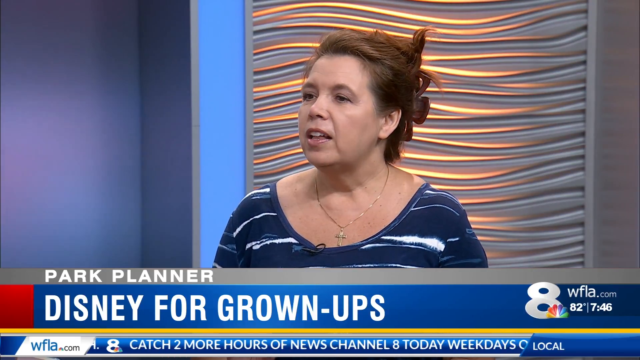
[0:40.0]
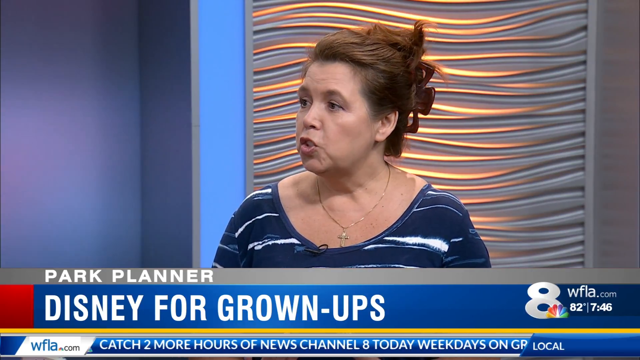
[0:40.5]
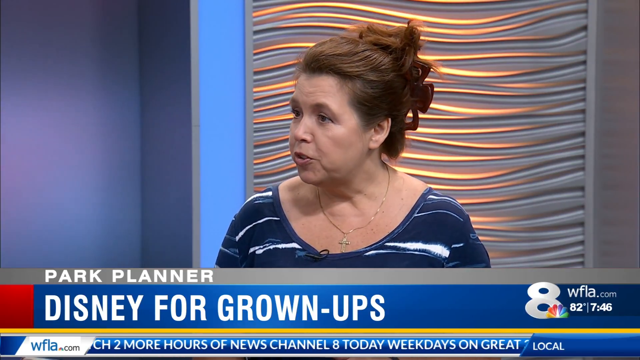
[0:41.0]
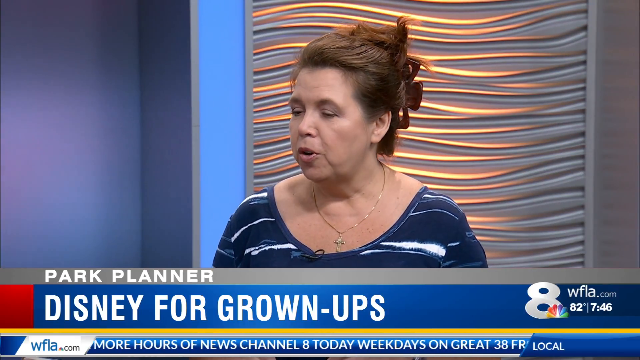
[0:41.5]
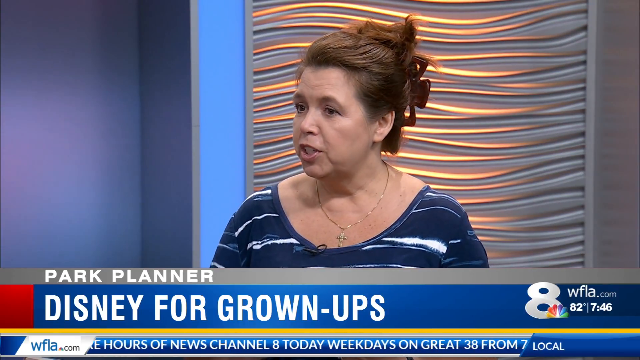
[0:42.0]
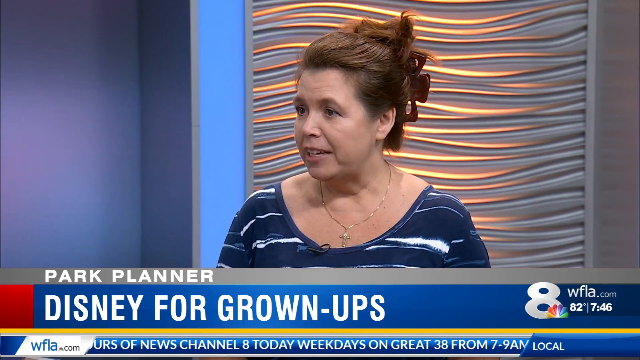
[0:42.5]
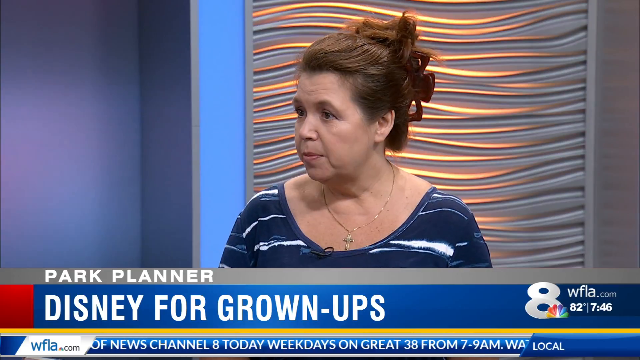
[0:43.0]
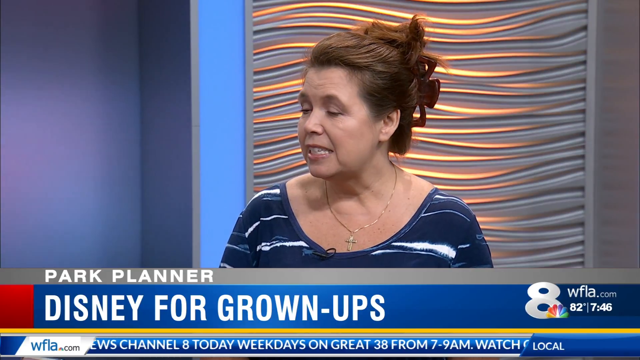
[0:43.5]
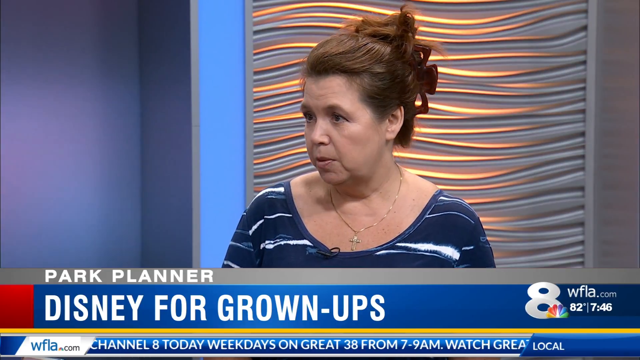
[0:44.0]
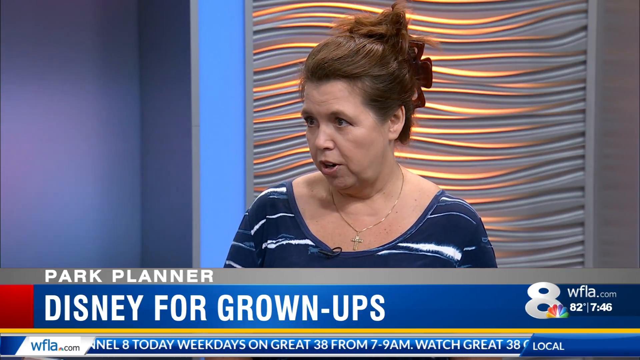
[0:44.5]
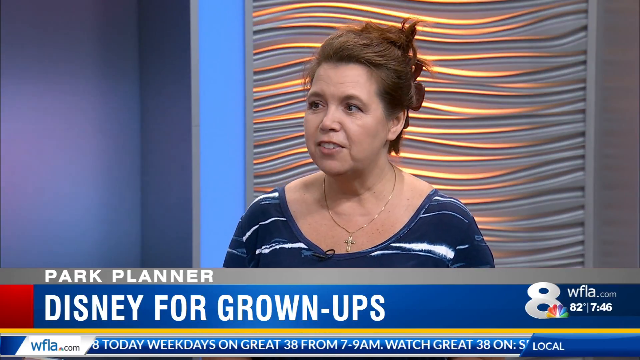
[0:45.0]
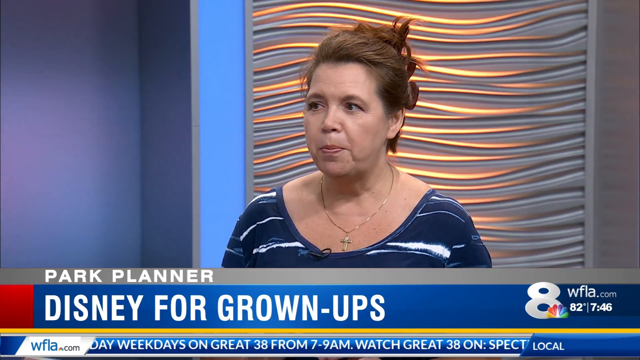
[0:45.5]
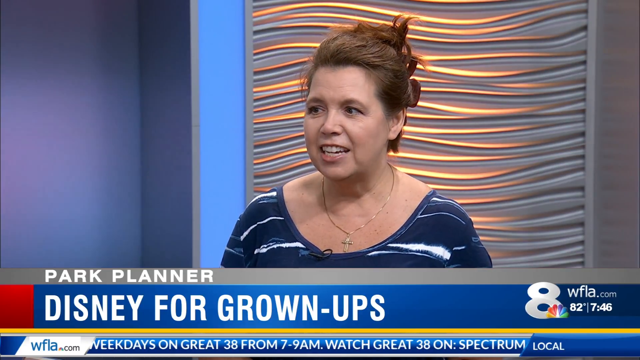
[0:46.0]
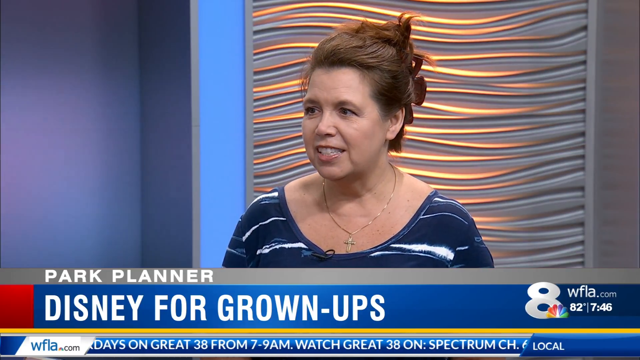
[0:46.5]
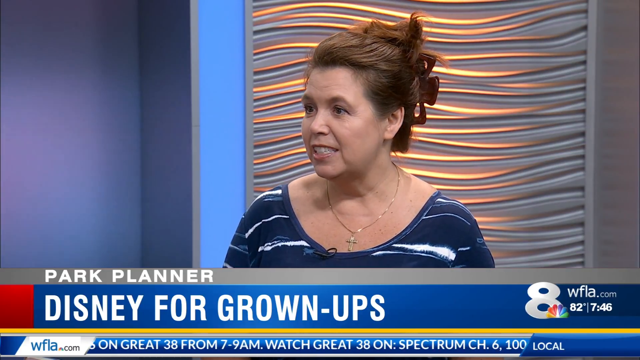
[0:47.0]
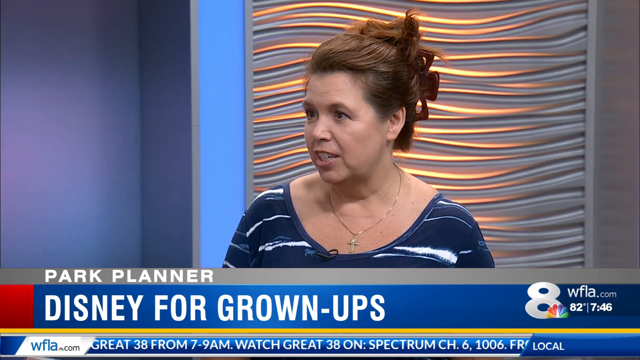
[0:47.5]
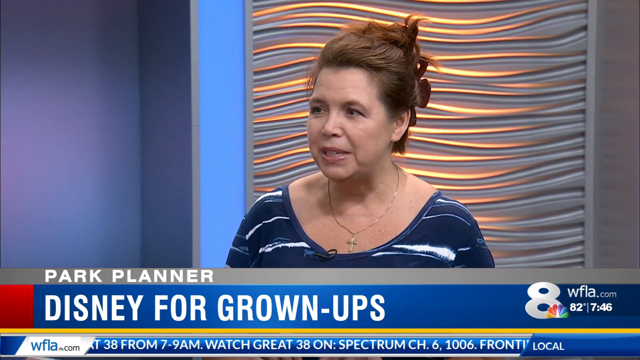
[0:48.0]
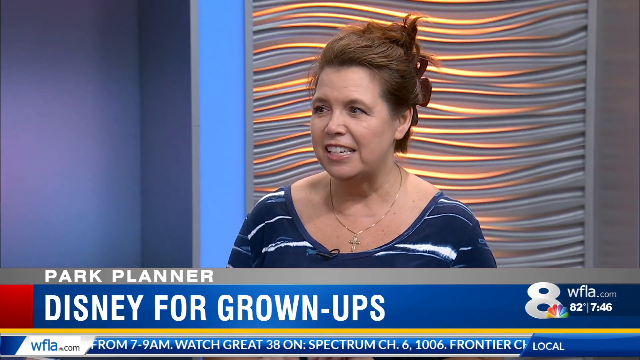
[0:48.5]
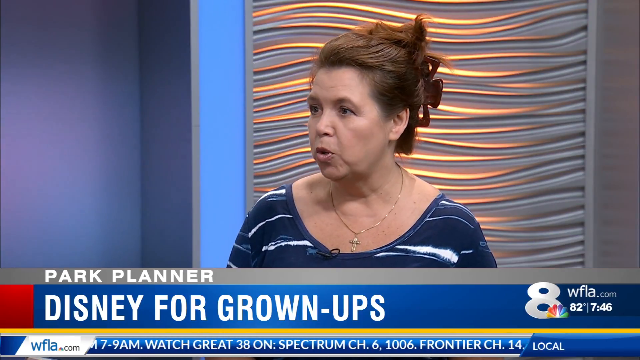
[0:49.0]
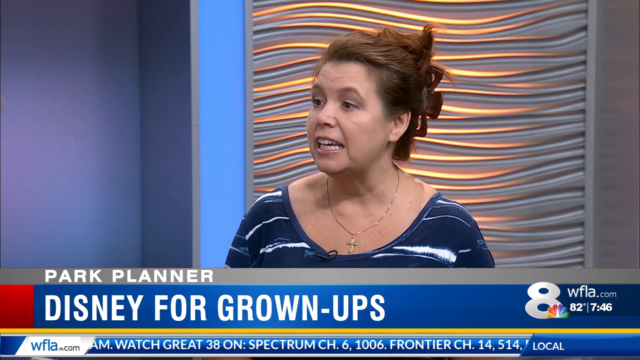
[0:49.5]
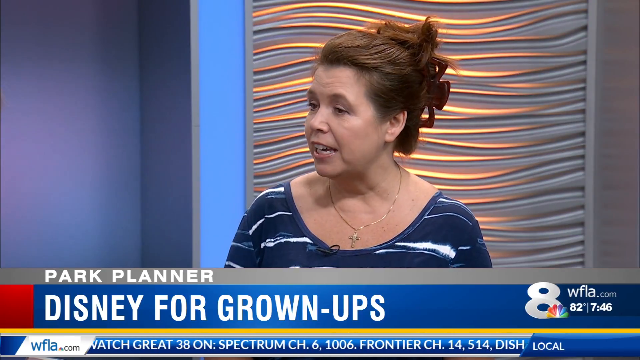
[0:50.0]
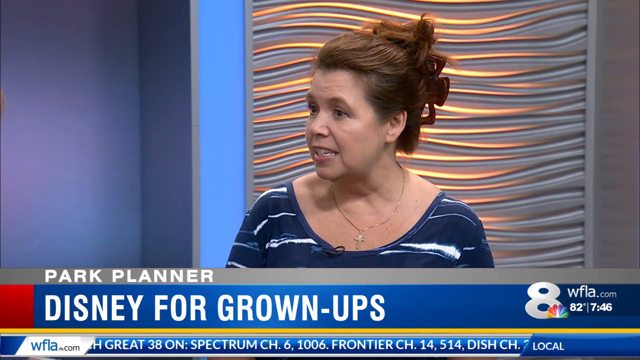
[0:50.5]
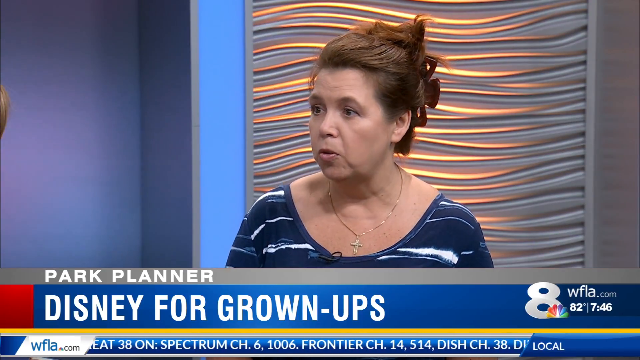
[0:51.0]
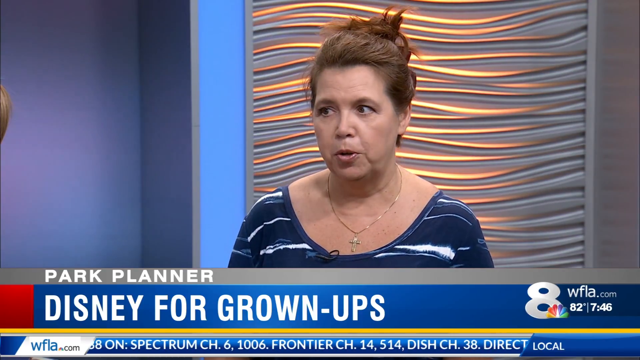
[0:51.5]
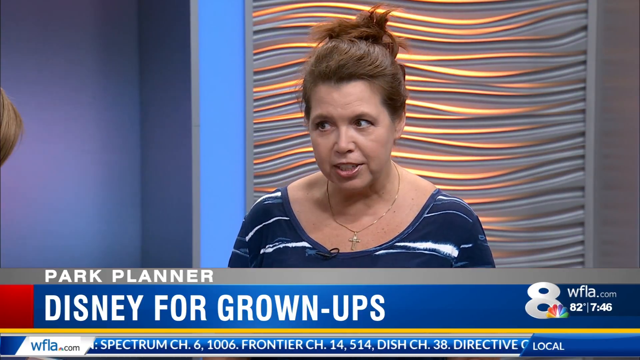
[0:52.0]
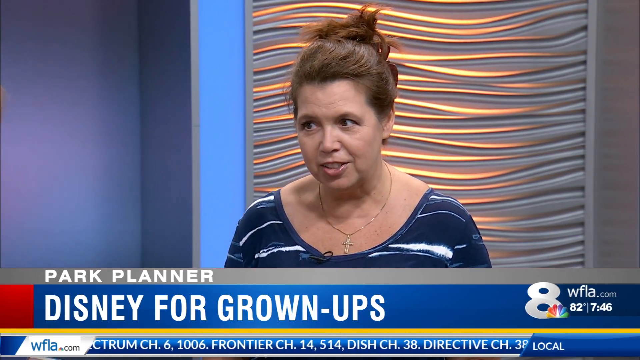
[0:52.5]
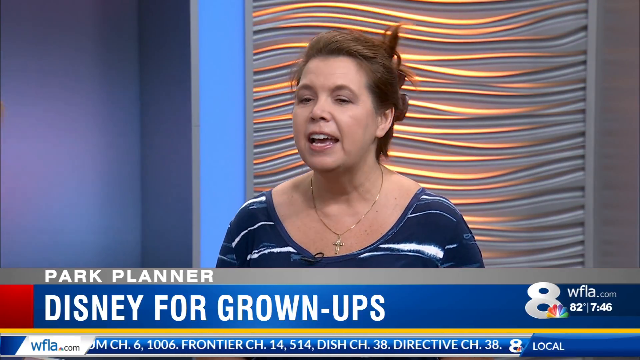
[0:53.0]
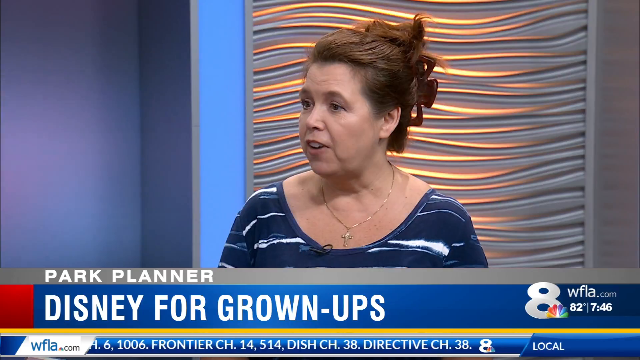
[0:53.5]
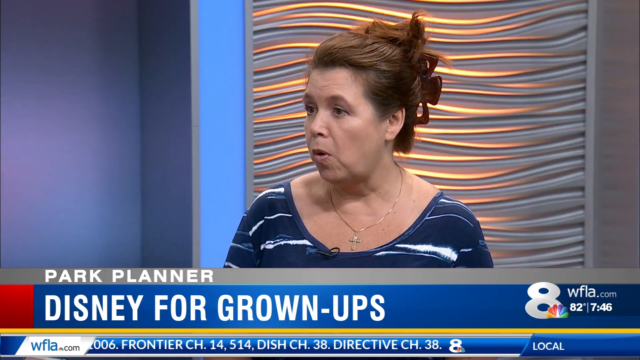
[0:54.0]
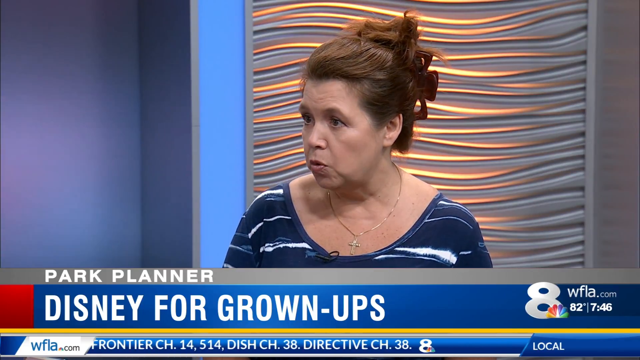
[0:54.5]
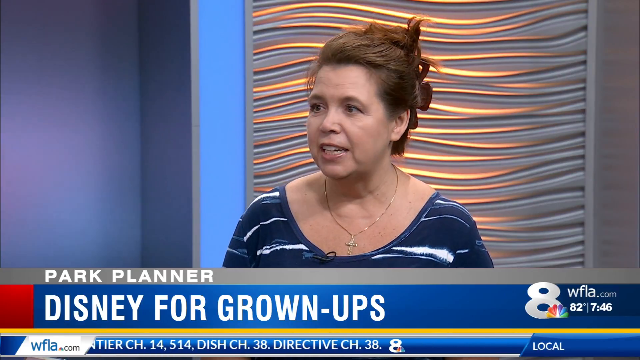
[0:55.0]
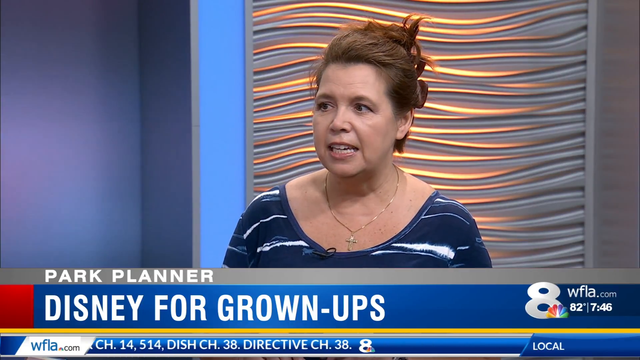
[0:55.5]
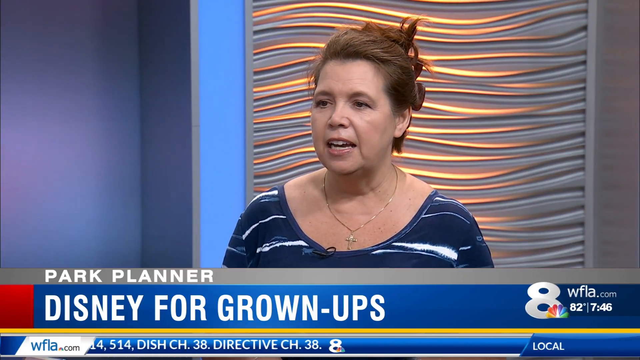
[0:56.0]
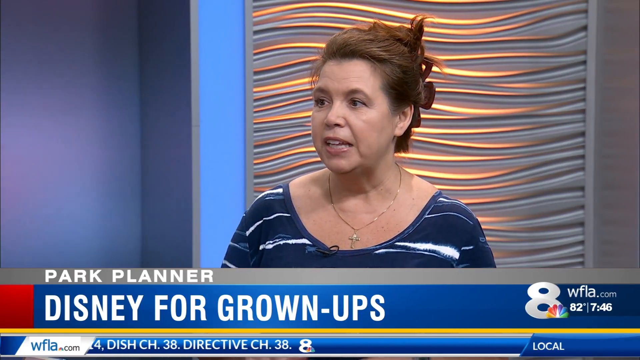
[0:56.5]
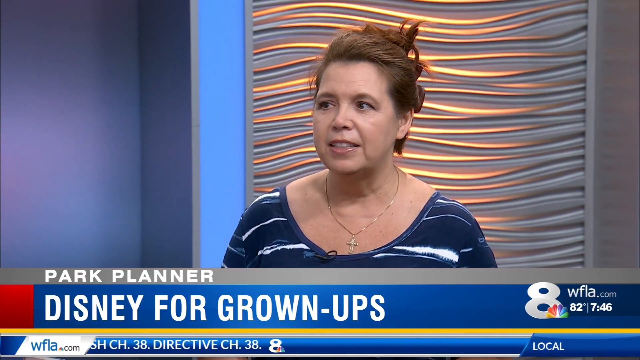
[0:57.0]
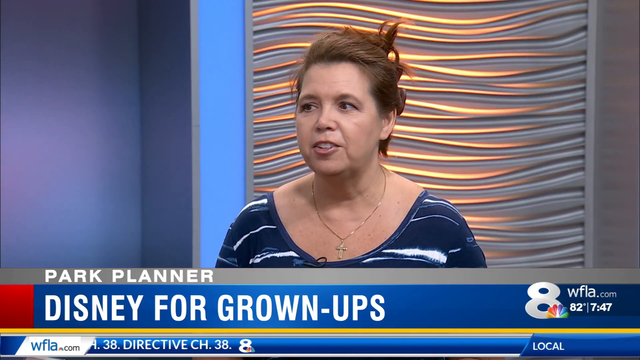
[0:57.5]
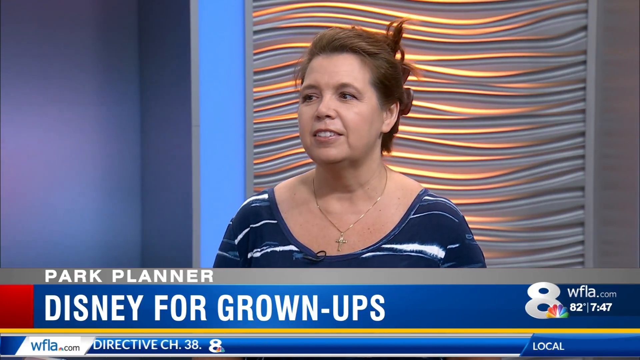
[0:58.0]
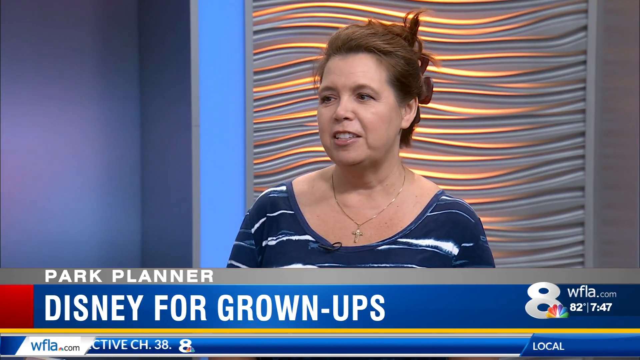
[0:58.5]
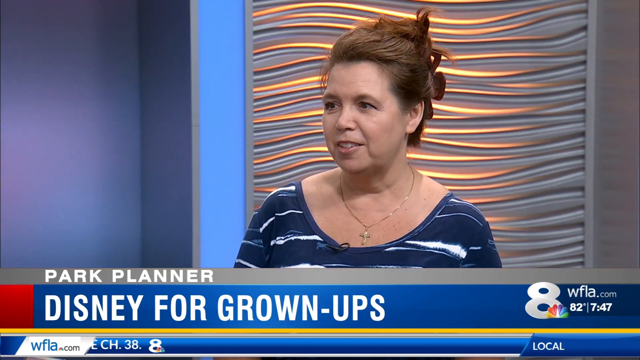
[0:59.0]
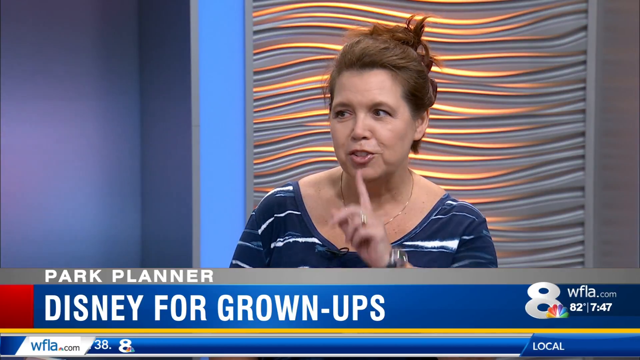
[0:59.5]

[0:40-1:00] Kathy Karylekas, in a blue and white T-shirt and a gold cross necklace with her brown hair tied up in a claw clip, is still on screen speaking. The banner below her says "Park Planner, Disney for grown-ups". Behind her is a patterned light background along with some blue. The news anchor's bangs and forehead enter the frame for just a moment, but mostly Kathy is alone in the frame speaking. For a moment she holds her index finger up to her mouth as she speaks, and she smiles slightly. A lavalier mic is clipped to her T-shirt. At the bottom of the screen a blue banner carries scrolling text with various announcements from the news outlet. The lower right corner of the screen shows "8" and the NBC logo, a colorful peacock, along with a temperature and time that read either 62 degrees and 7:40 or 82 degrees and 7:46, with no AM or PM visible. Above that it says "wfla.com".